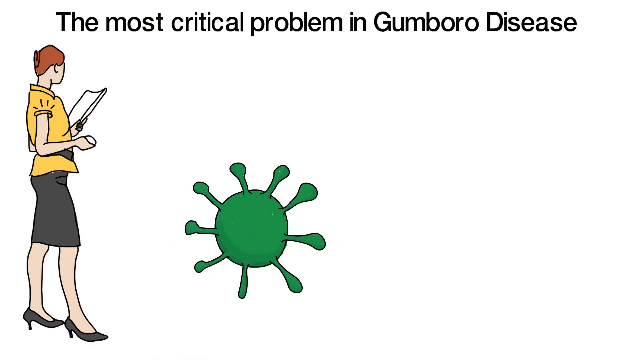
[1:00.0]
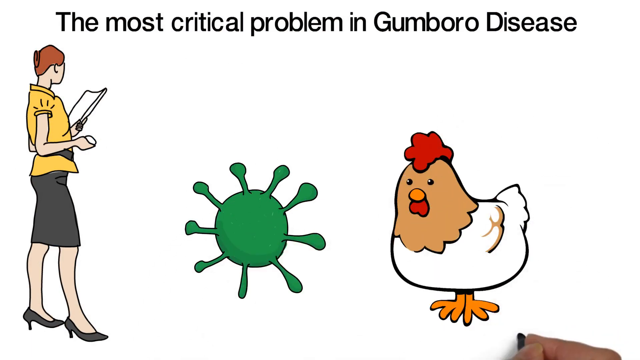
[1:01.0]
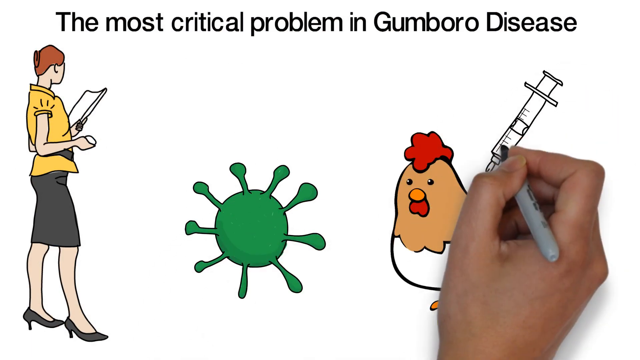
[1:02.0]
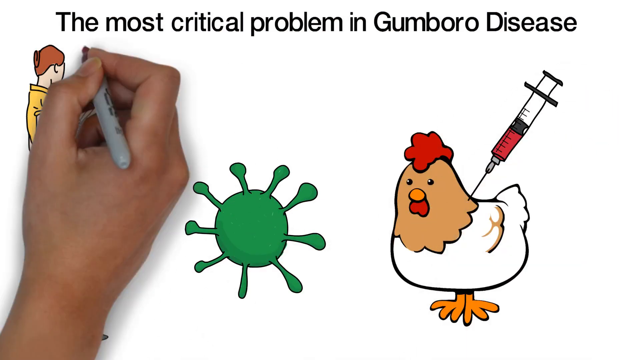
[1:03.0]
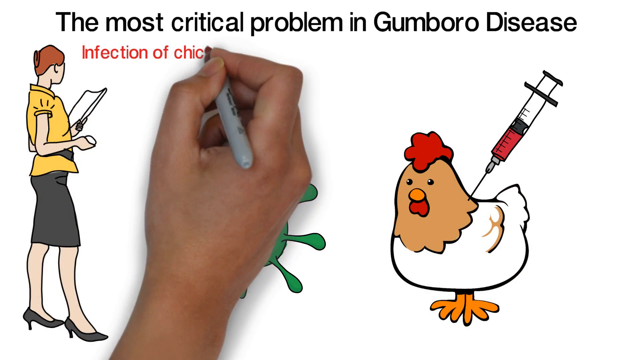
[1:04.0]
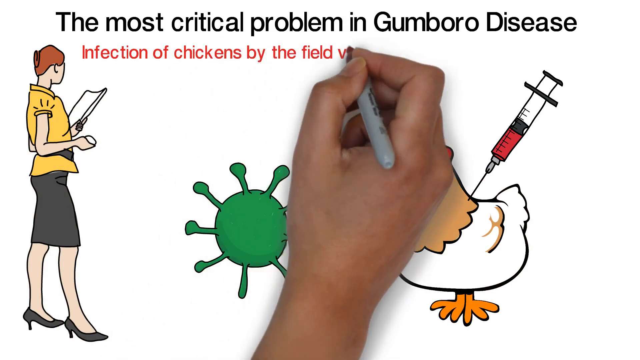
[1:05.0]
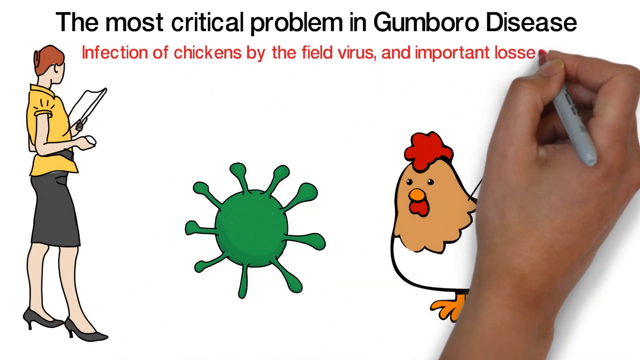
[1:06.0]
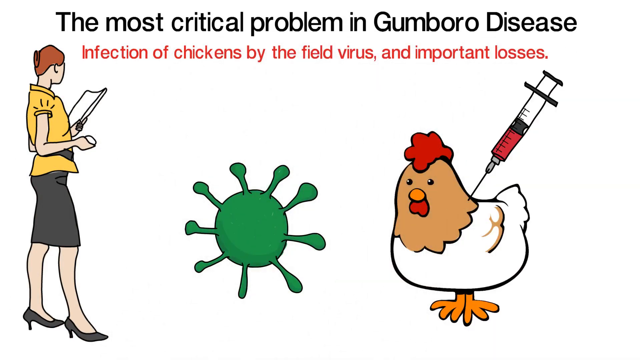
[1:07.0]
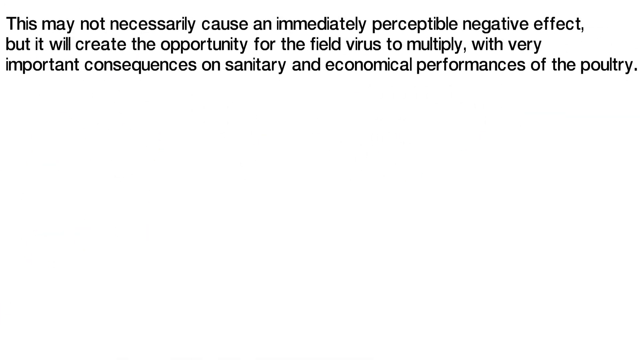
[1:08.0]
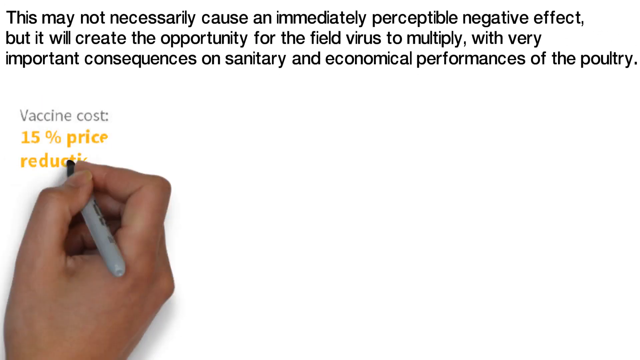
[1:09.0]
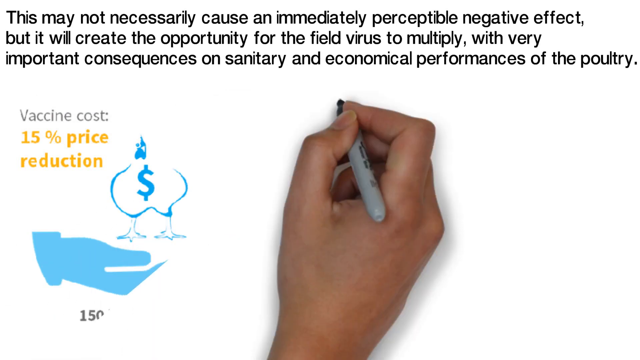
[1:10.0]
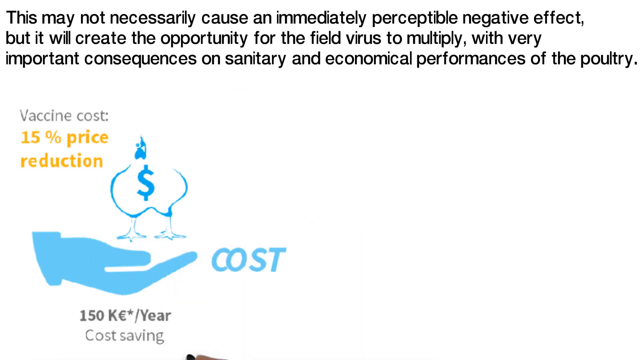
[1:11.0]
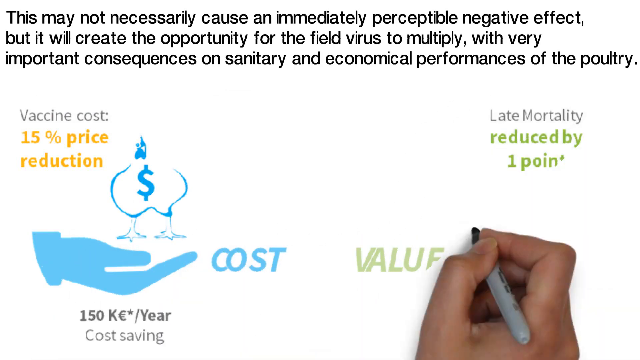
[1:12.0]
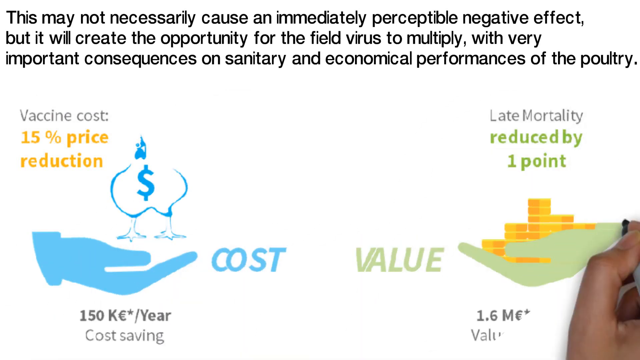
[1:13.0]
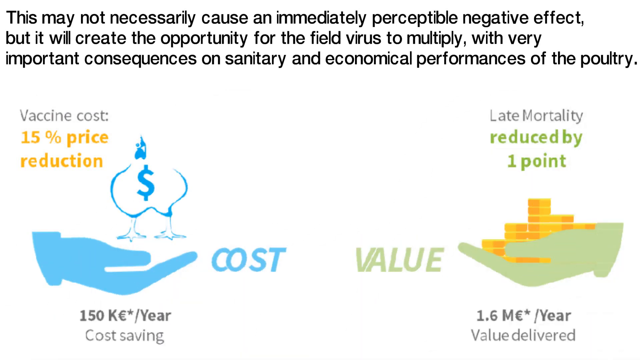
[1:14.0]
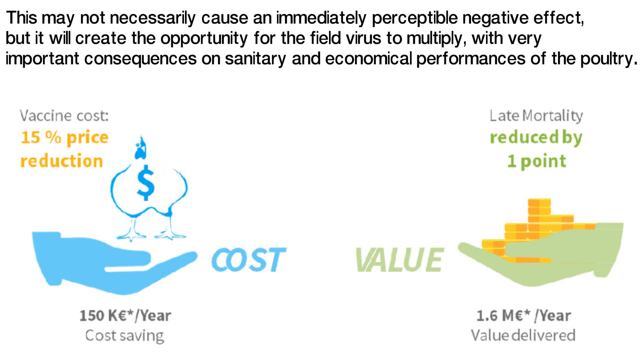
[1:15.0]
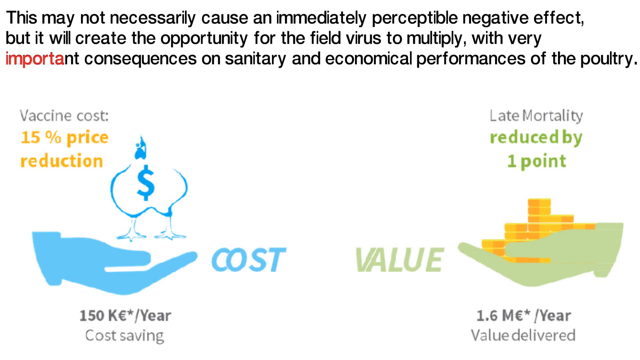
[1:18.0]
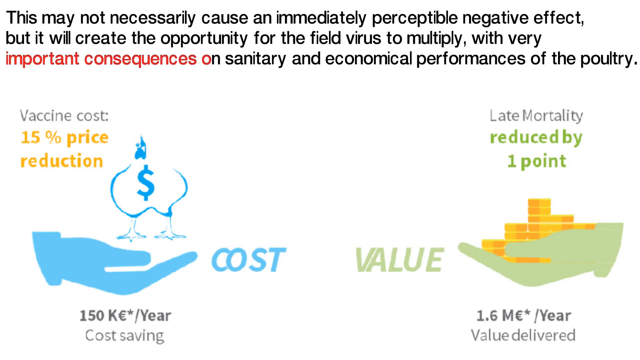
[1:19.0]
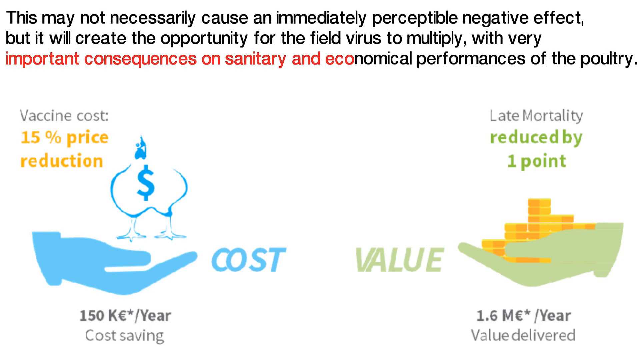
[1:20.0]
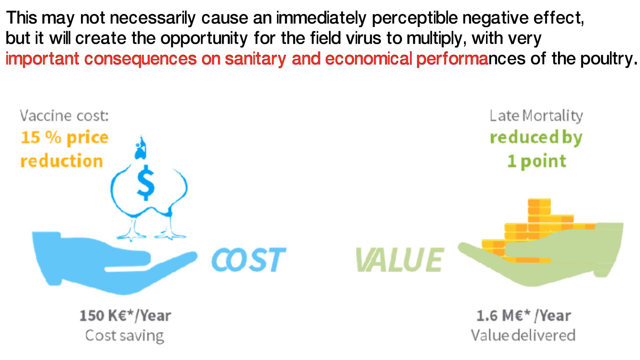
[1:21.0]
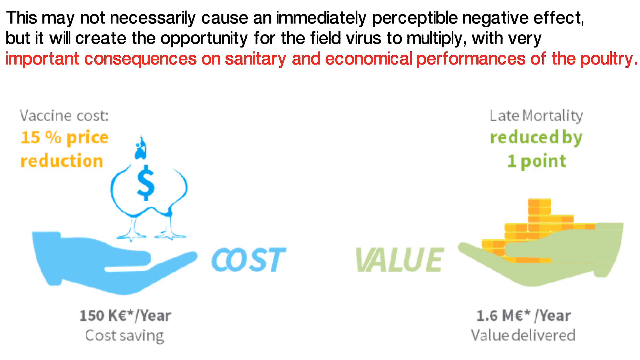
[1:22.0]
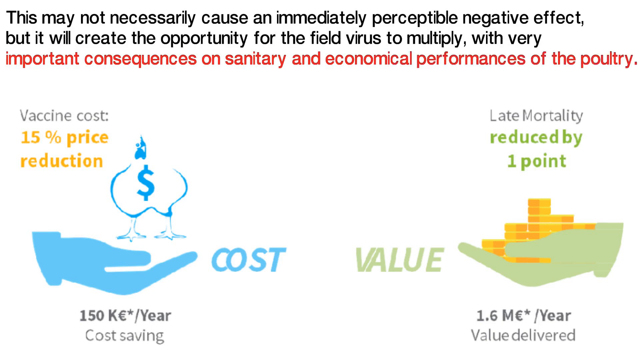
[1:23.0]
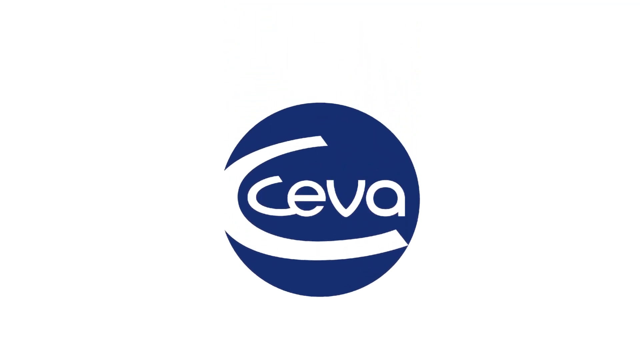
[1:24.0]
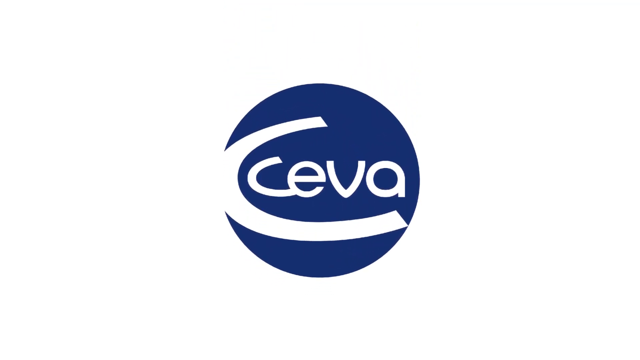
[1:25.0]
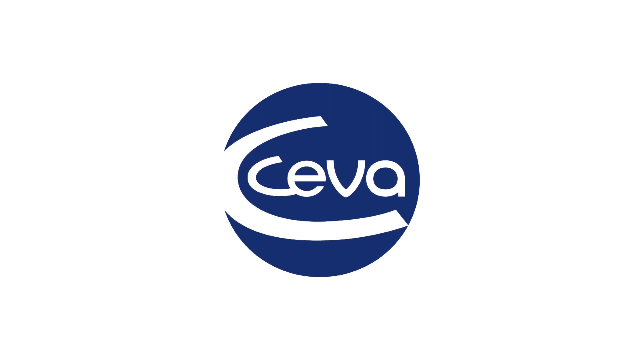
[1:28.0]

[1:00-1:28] A cartoon woman wears a yellow blouse, a black knee-length skirt with a little black belt, and black pumps, and looks down at a paper document she is holding. The hand draws a pretty large green globular virus with nine spikes. Next, the hand draws with a sharpie marker a cartoon chicken that is brown and white with a red crown, an orange beak and orange feet. A needle pokes into the chicken; its vial seems to contain red ink, representing red blood from the chicken. The hand then writes in red ink "infection of chickens by the field virus and important losses". The next screen is filled with written text: "This may not necessarily cause an immediately perceptible negative effect, but it will create the opportunity for the field virus to multiply with very important consequences on sanitary and economical performances of the poultry." The hand then draws an image labeled "vaccine cost", with "15% price reduction" underneath in yellow text. A blue cartoon hand holds the outline of a chicken with a dollar sign in its center, and beneath it are the words "150 a year cost saving". This cost is compared to the value on the right side of the image, which says "late mortality" with "reduced by one point" in green underneath. A green cartoon hand holds yellow coins, with the word "value" next to it and, underneath, a figure of 1.6 followed by "per year value delivered". The words "important consequences on sanitary and economical performances of the poultry" at the top of the text are highlighted in red. The final slide shows what is possibly a trademark image: the word "CEVA" in blue.